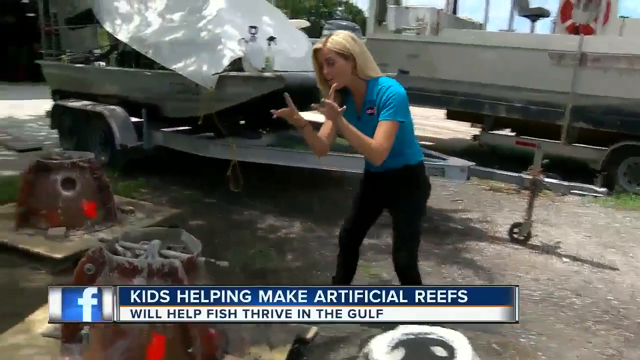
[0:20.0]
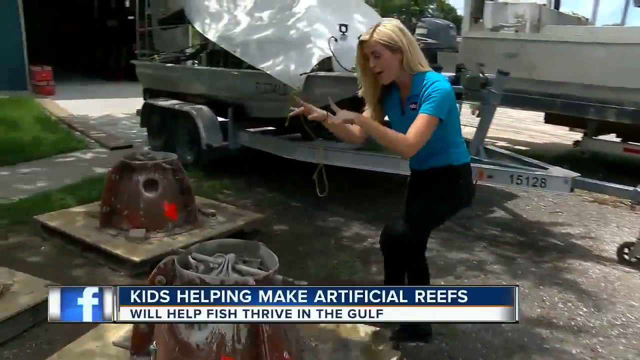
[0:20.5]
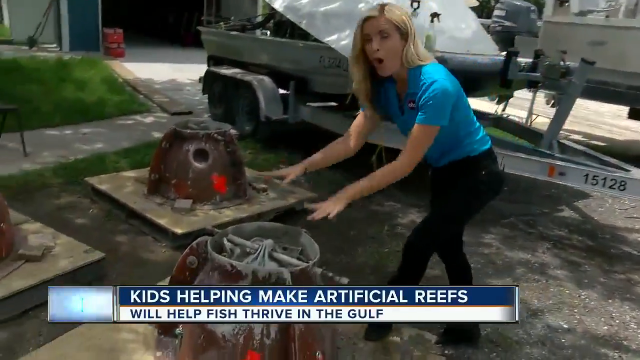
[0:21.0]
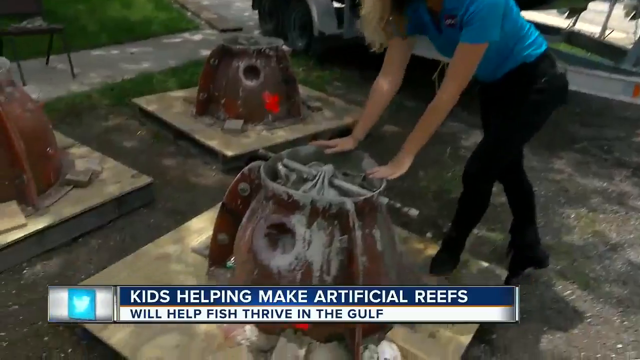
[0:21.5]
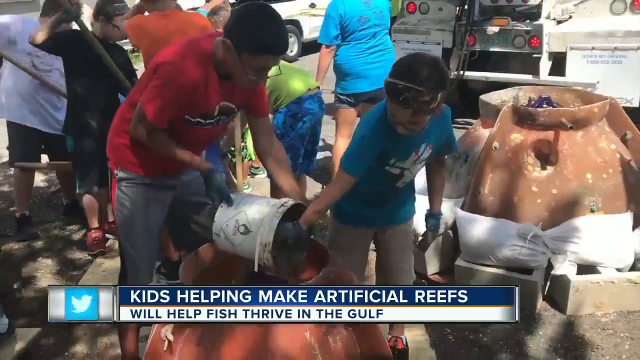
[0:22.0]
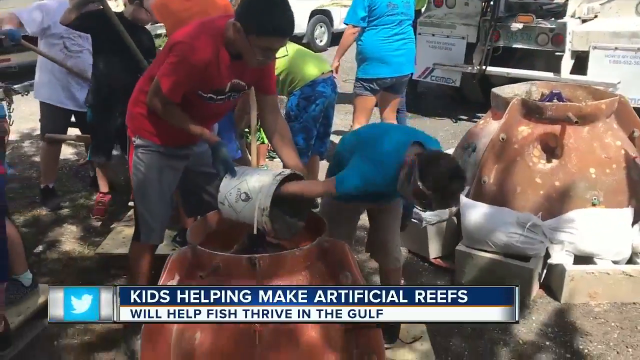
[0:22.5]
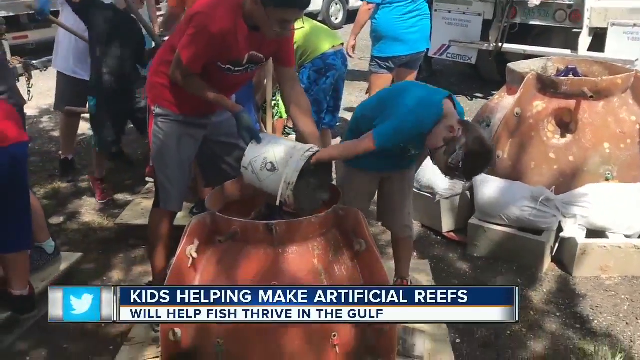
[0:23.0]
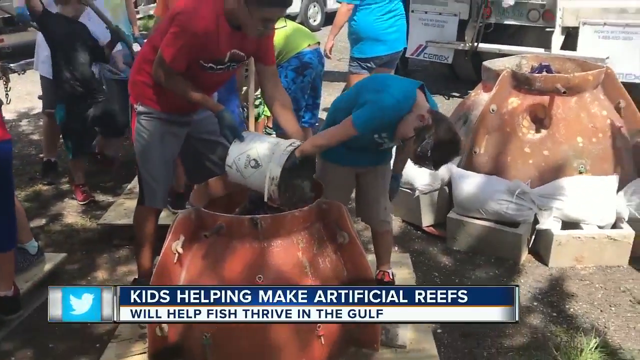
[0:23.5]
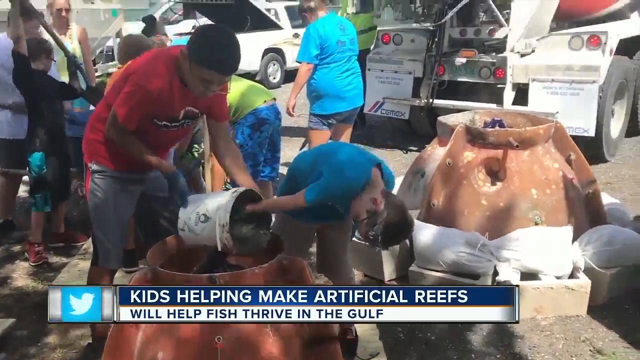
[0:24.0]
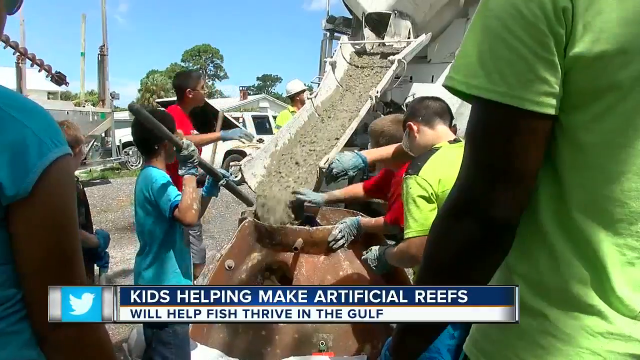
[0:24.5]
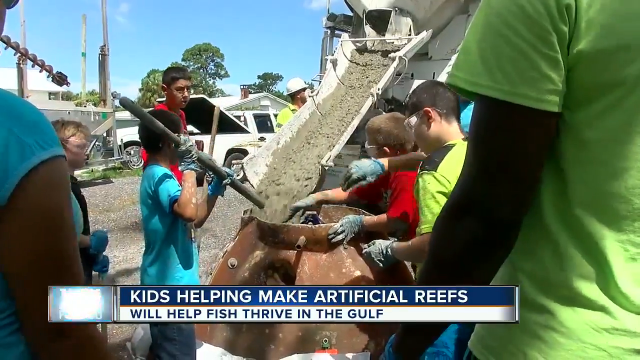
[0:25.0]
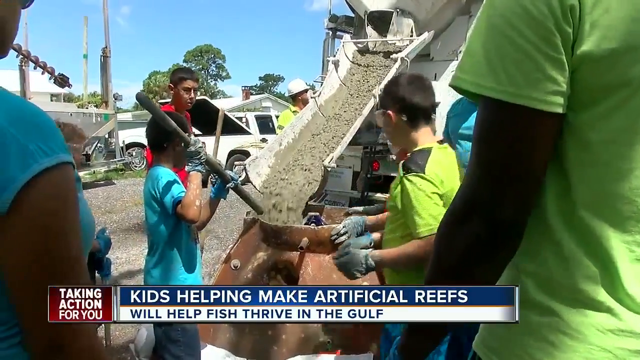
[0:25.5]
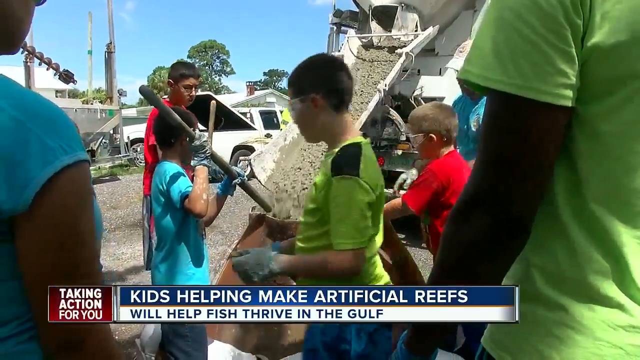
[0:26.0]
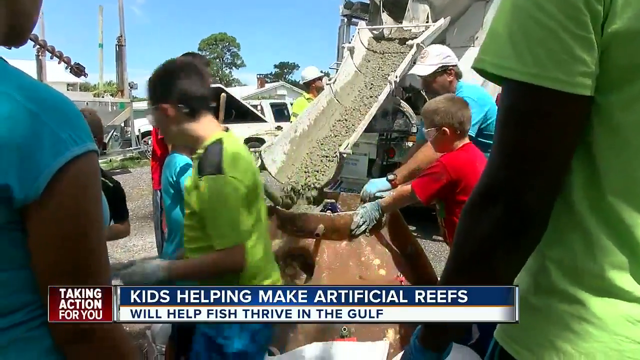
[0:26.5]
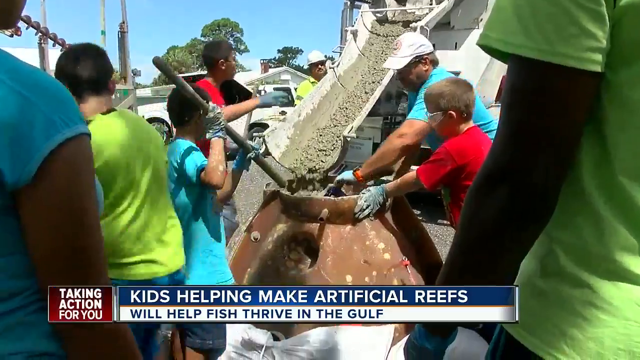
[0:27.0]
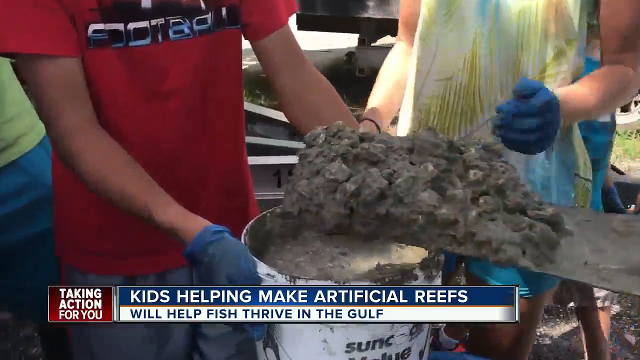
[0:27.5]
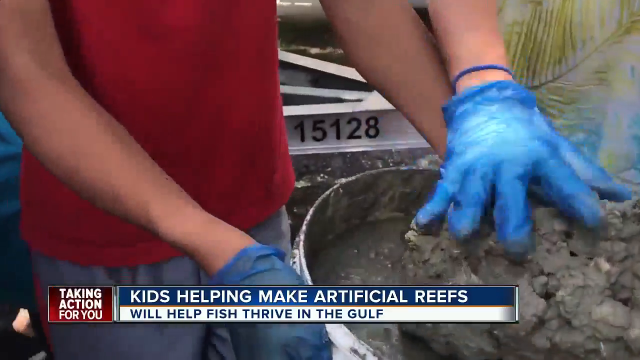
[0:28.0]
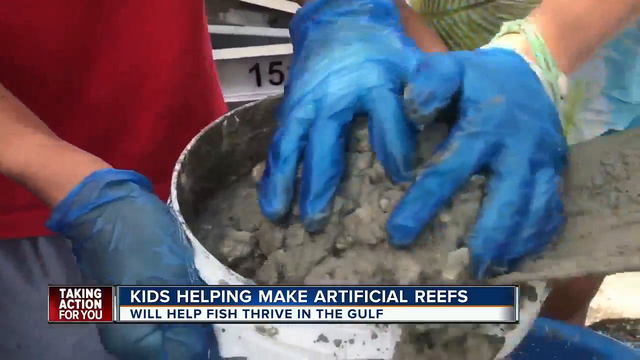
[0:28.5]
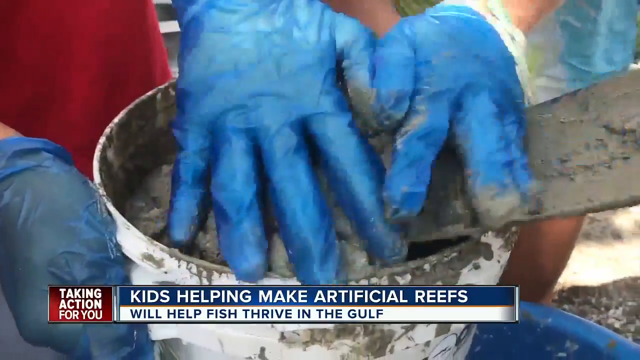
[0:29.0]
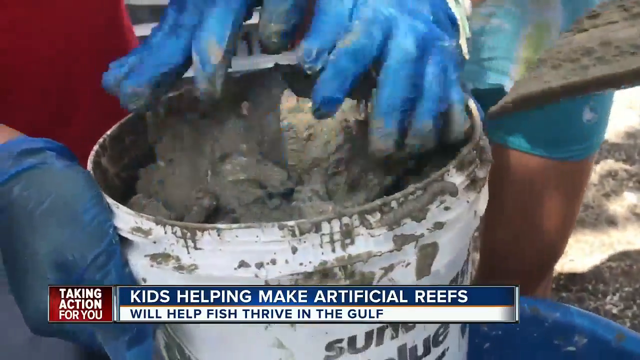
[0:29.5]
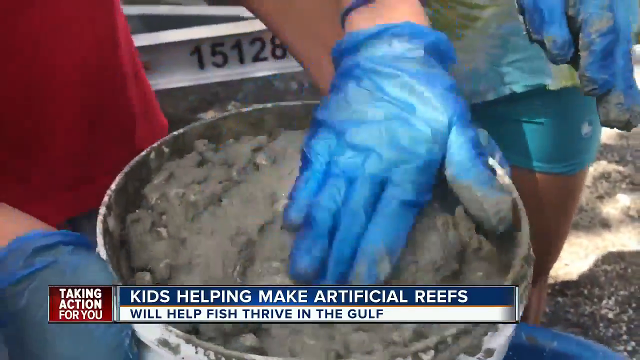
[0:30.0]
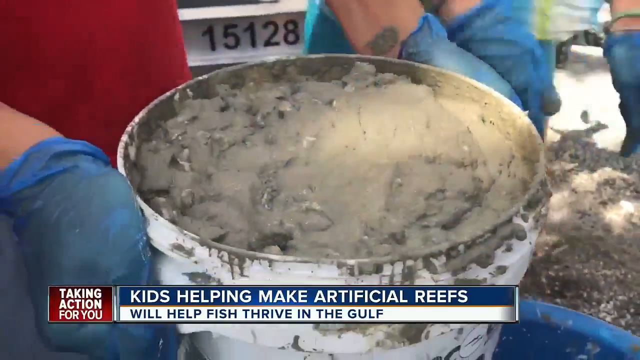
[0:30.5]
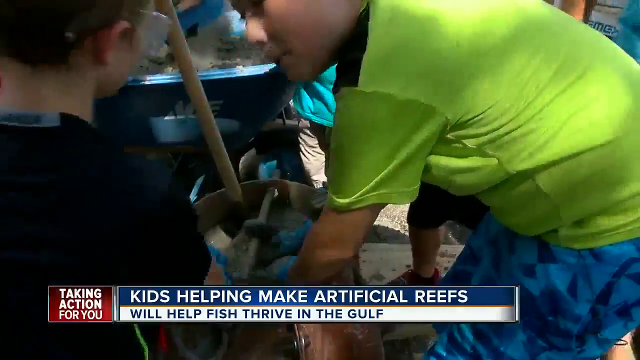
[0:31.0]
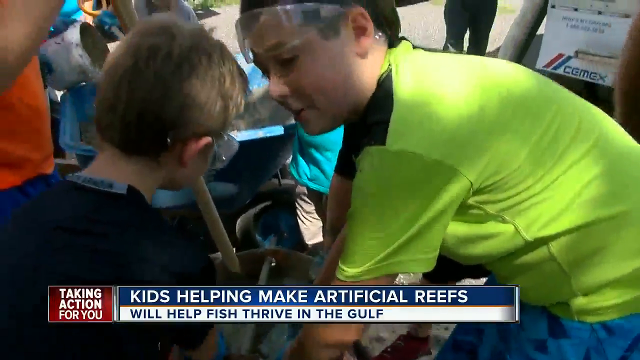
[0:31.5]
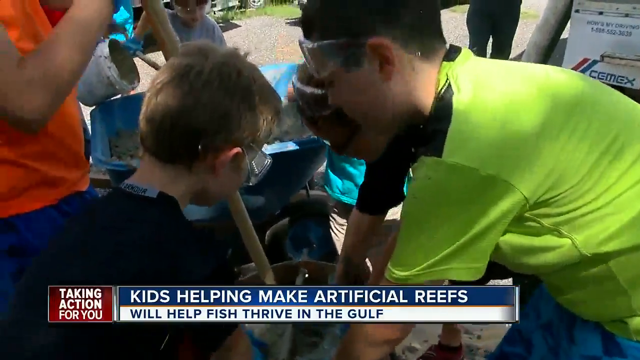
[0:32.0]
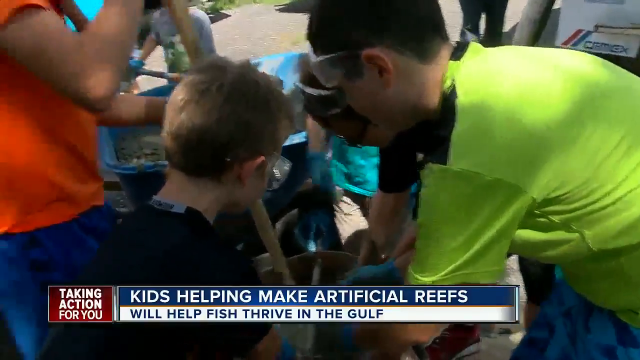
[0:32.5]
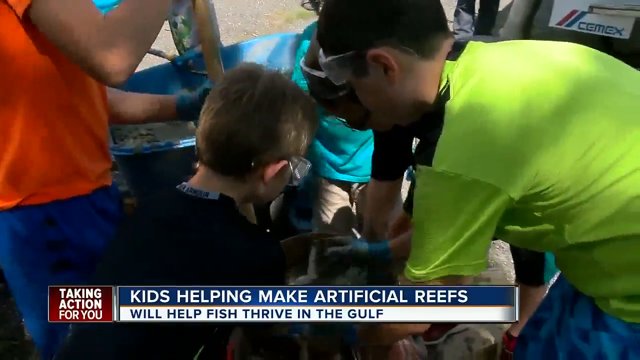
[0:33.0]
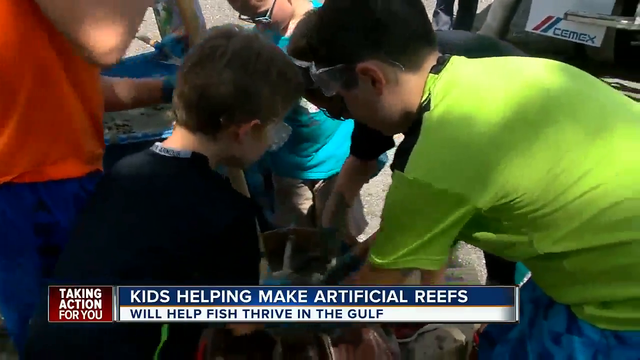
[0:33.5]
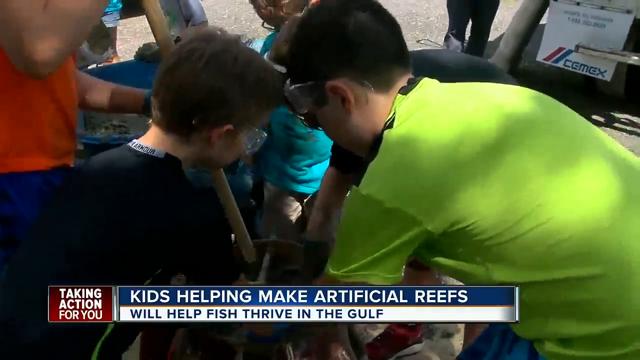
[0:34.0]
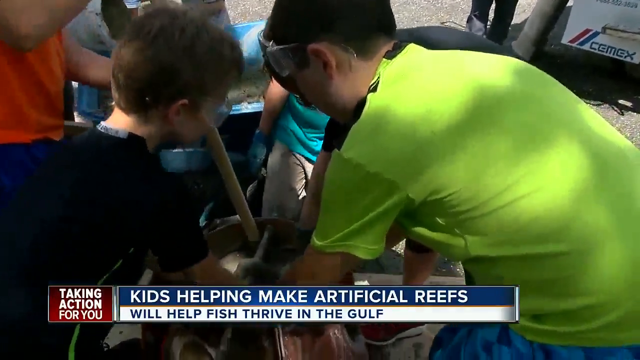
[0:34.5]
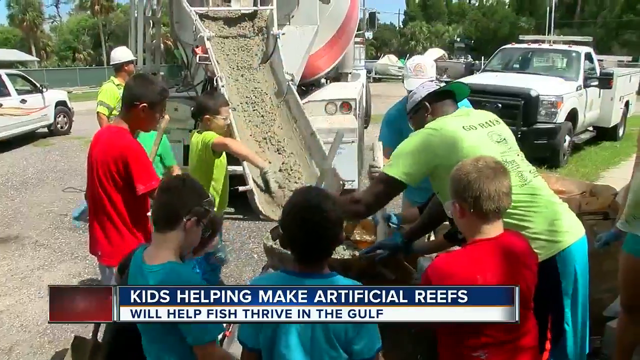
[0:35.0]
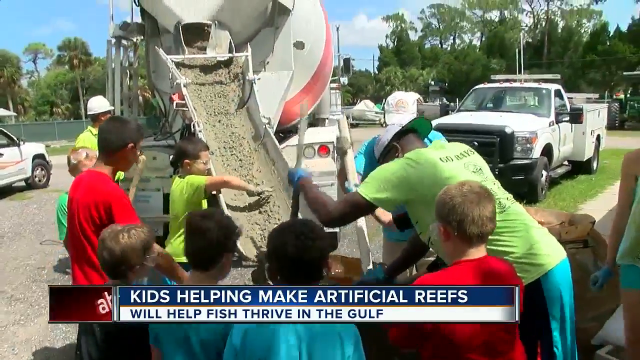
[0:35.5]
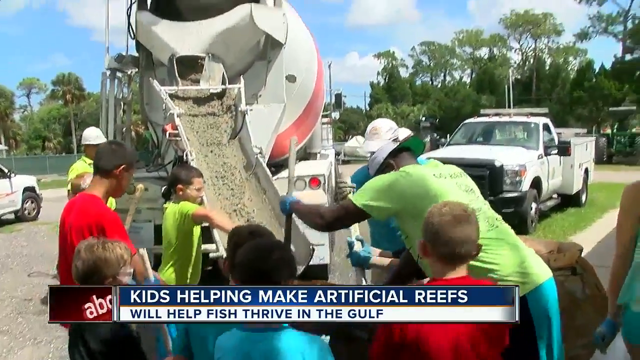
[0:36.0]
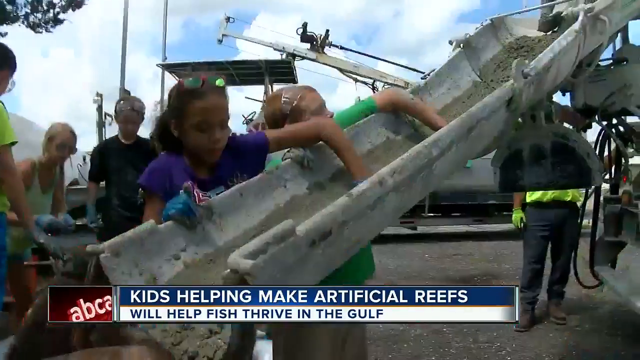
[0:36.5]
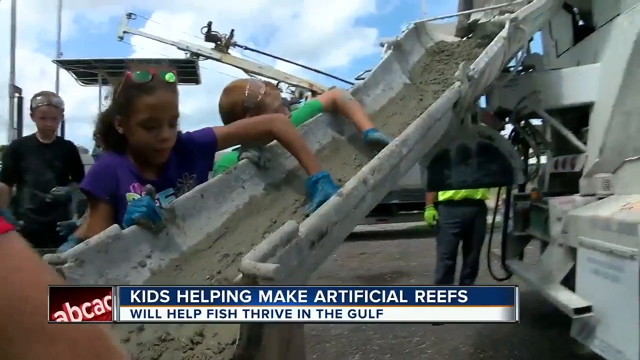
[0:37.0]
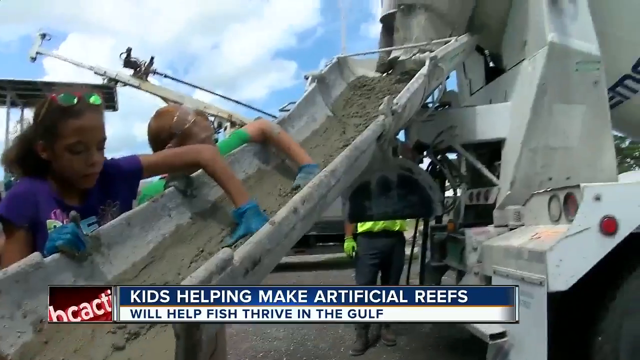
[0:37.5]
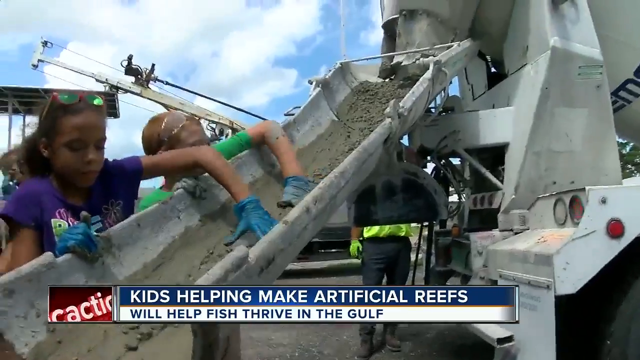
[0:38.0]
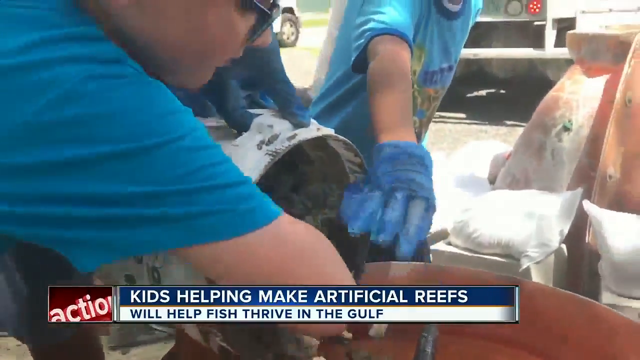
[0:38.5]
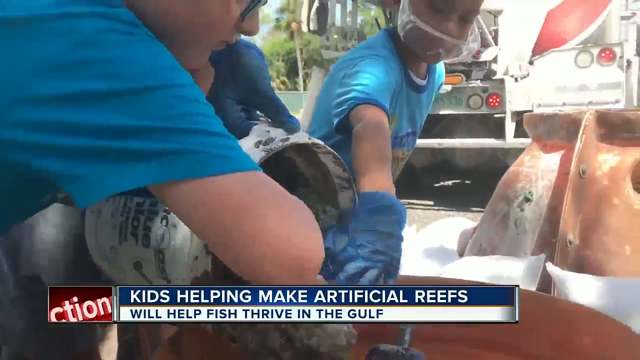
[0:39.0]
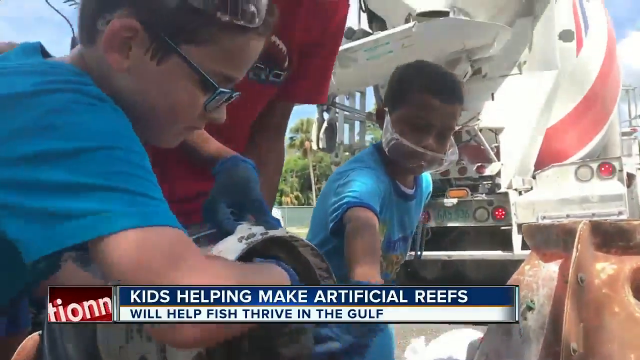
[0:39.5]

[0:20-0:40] The man continues speaking, and the monitor transitions to a view under the ocean where schools of fish gather around. The scene then changes to a female reporter with blonde hair, a baby blue collared shirt, and black slacks. Text at the bottom reads "Wendy Lane" along with the Twitter username "Wendy Lane TV." Wendy appears to be squatting next to an item sculpted into coral, and behind her appears to be a boat hitched to a trailer. While squatting, she places her hand on the sculpted item and puts her hands through its holes; it has rock textures at the bottom. White text reads "kids helping make artificial reefs," followed by blue text reading "will help fish thrive in the Gulf." She then stands up and starts walking over to more custom reefs.